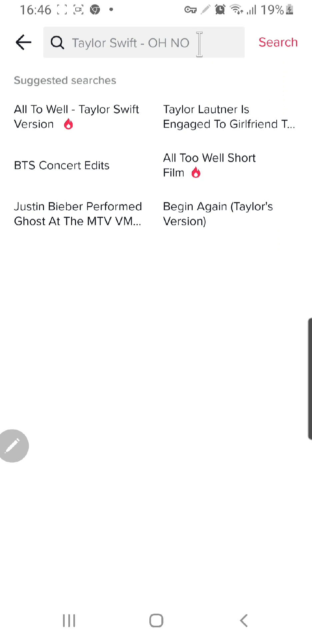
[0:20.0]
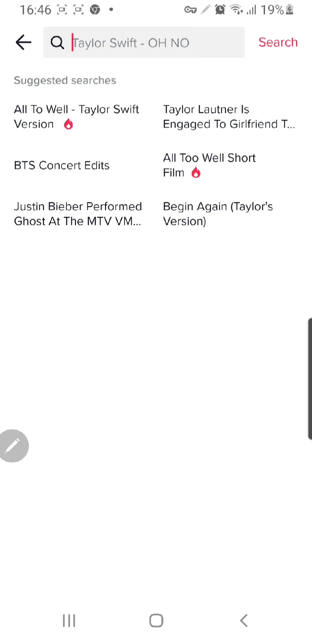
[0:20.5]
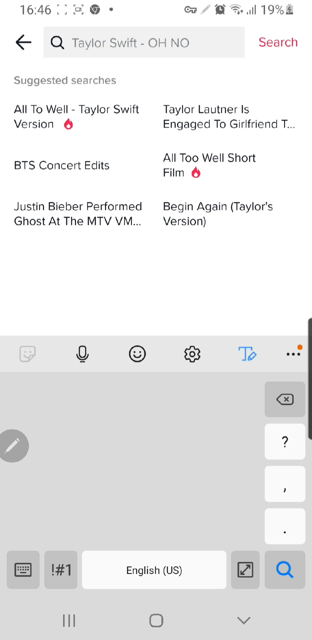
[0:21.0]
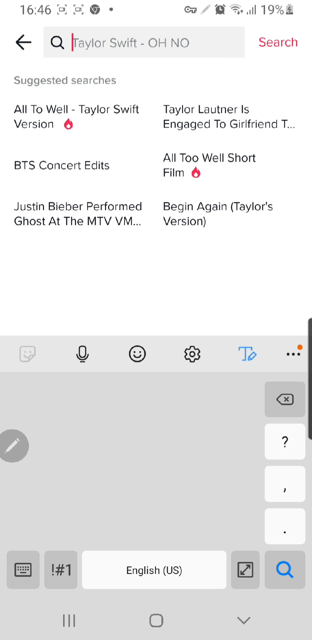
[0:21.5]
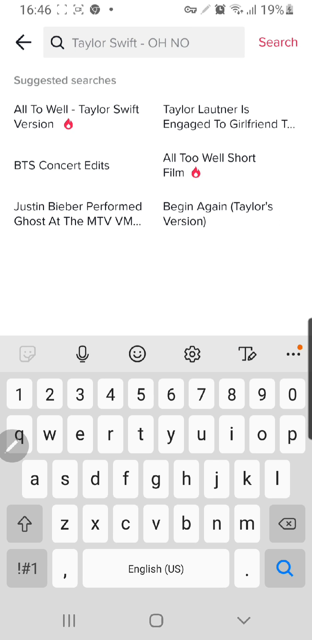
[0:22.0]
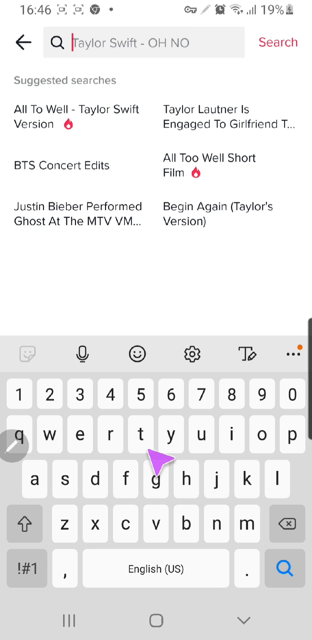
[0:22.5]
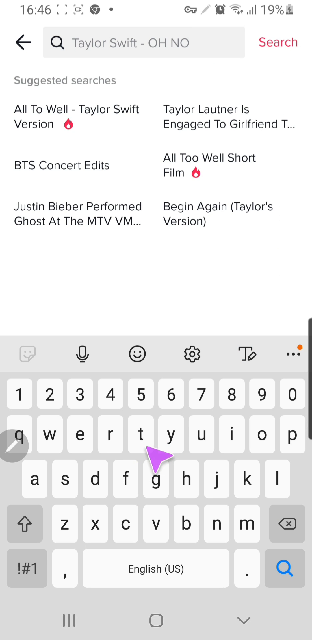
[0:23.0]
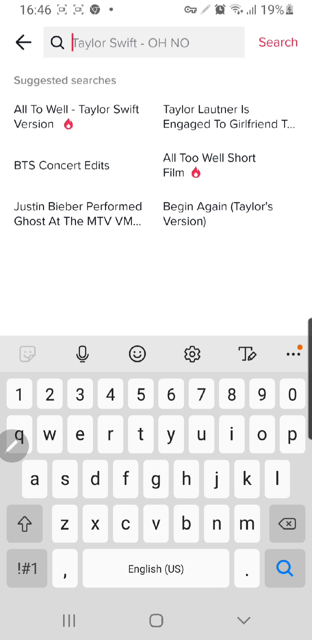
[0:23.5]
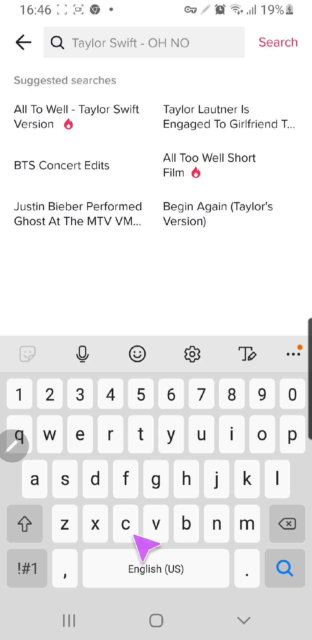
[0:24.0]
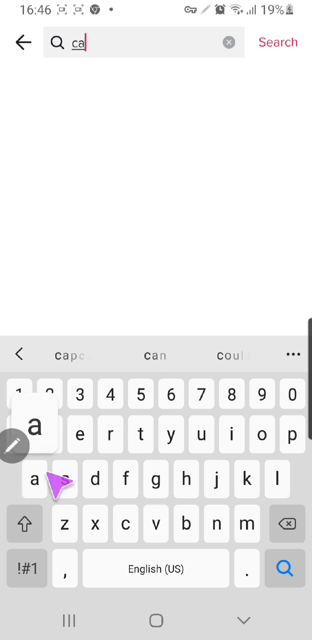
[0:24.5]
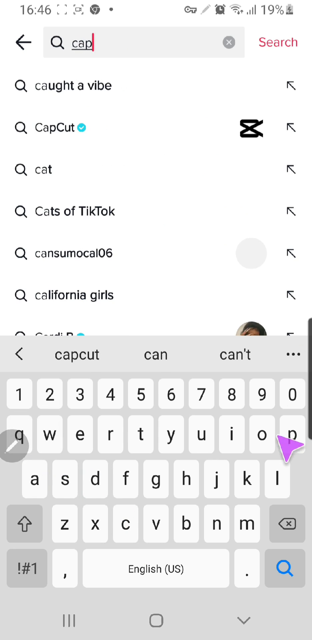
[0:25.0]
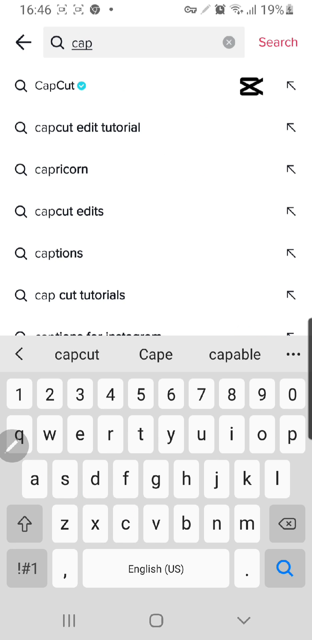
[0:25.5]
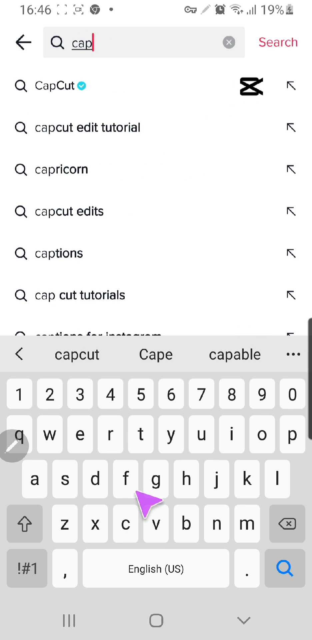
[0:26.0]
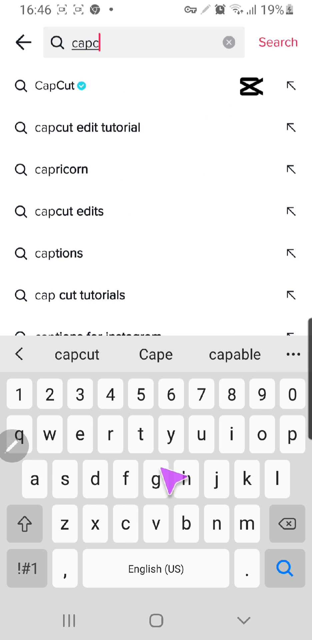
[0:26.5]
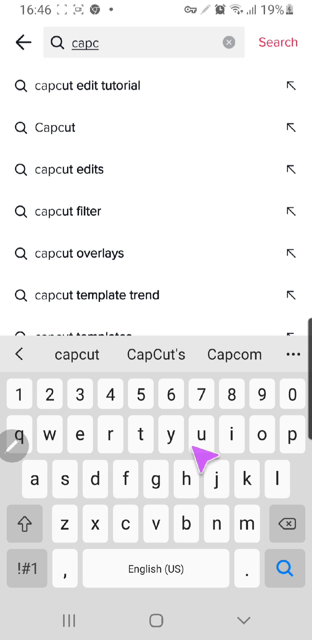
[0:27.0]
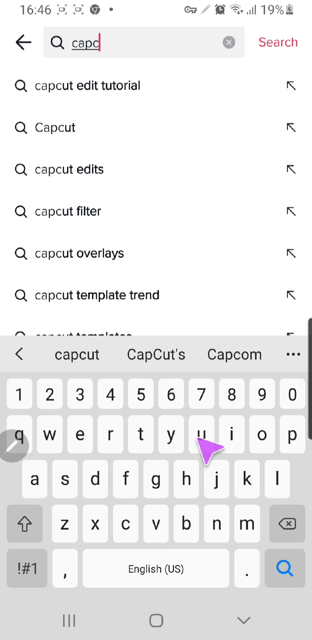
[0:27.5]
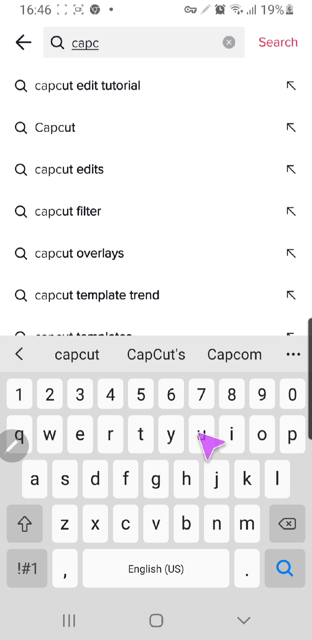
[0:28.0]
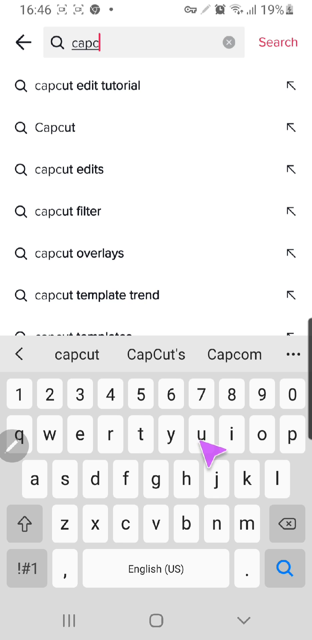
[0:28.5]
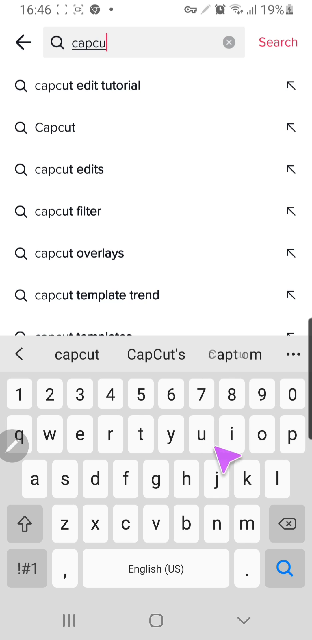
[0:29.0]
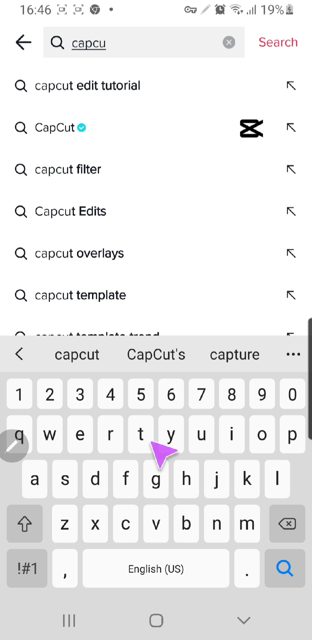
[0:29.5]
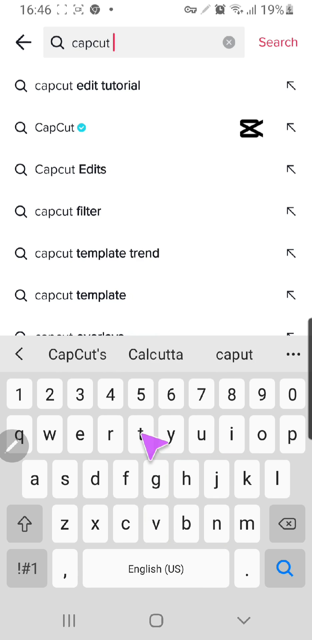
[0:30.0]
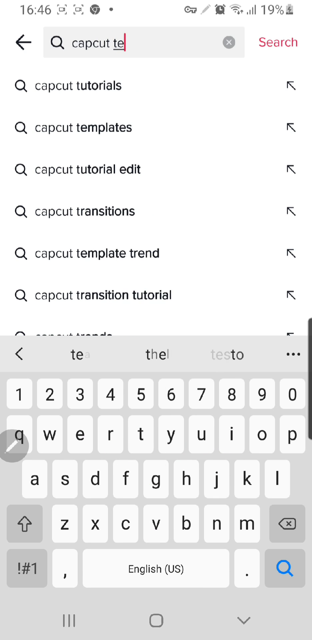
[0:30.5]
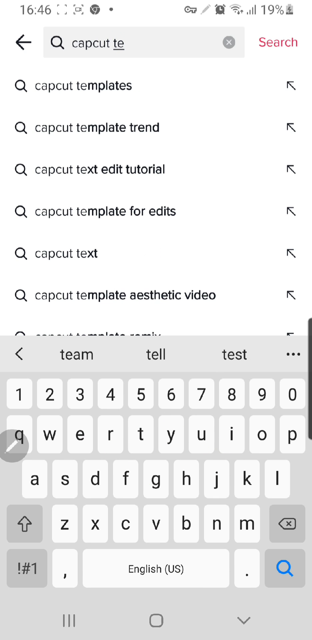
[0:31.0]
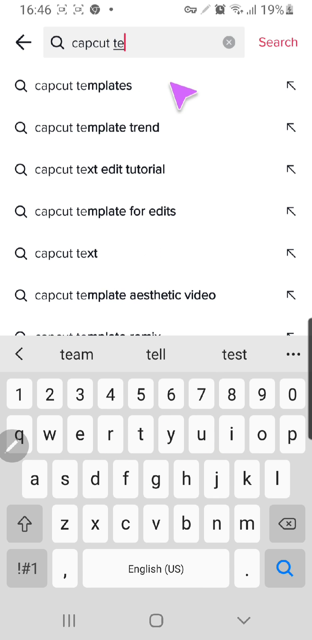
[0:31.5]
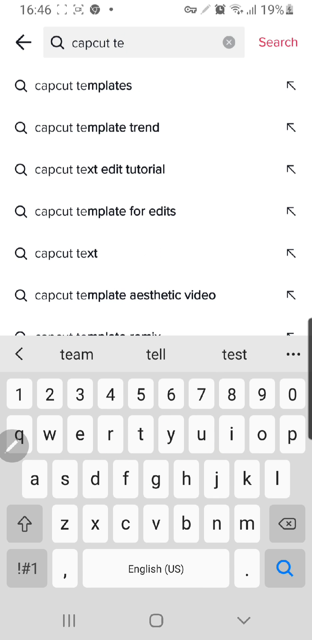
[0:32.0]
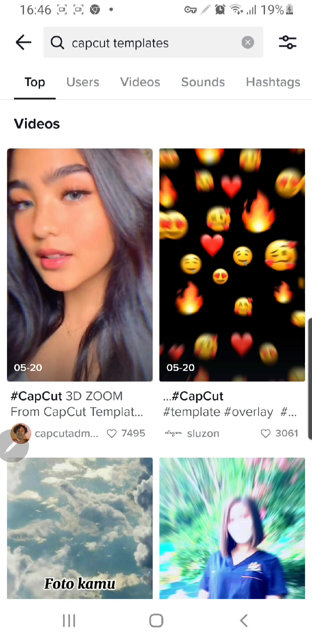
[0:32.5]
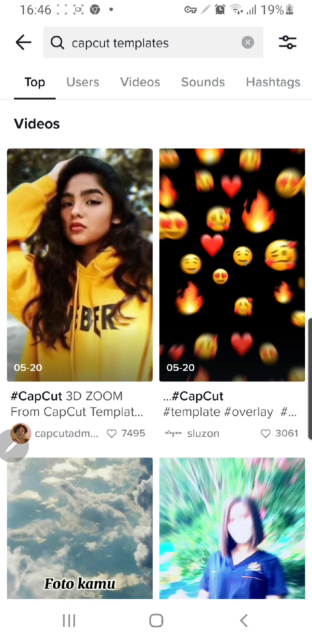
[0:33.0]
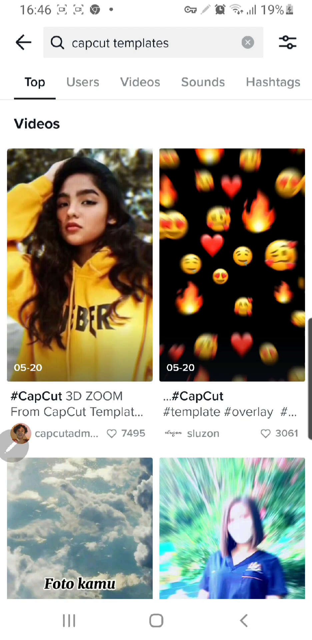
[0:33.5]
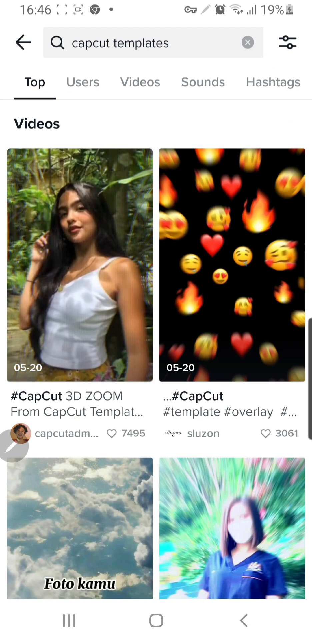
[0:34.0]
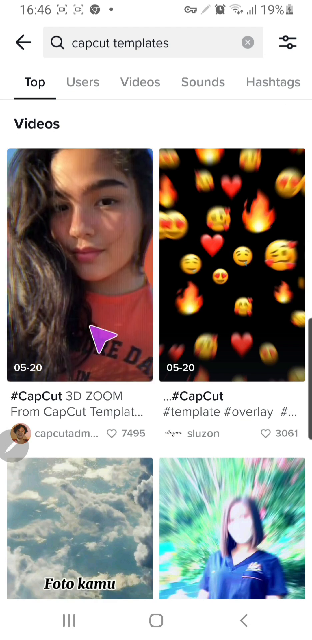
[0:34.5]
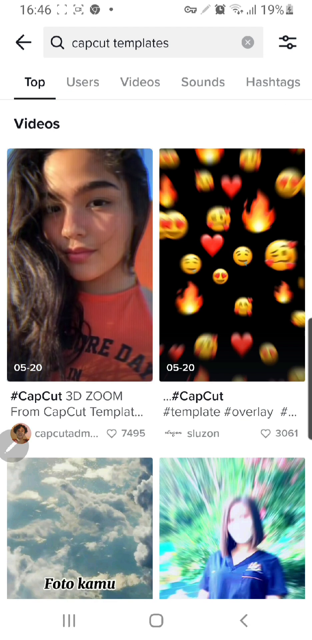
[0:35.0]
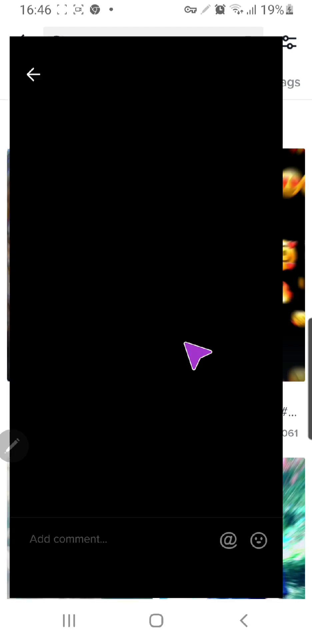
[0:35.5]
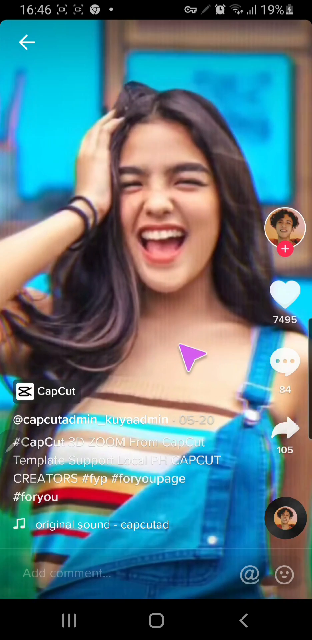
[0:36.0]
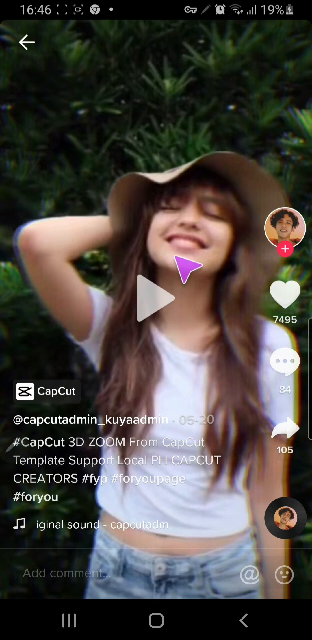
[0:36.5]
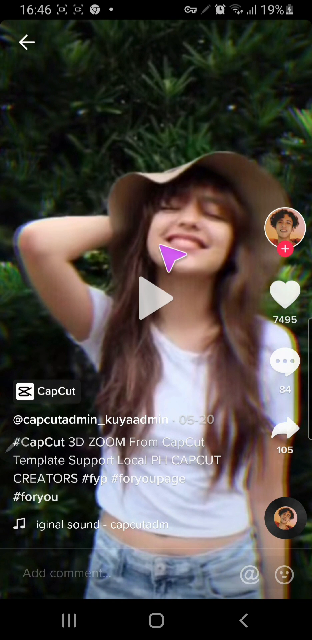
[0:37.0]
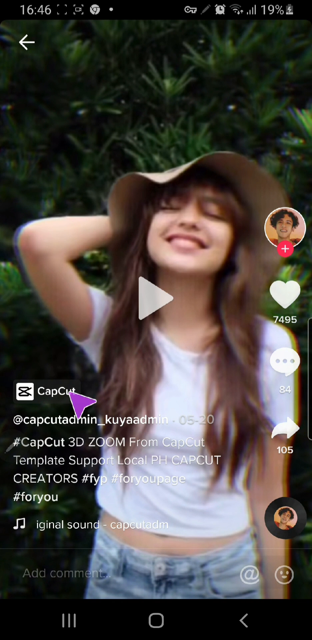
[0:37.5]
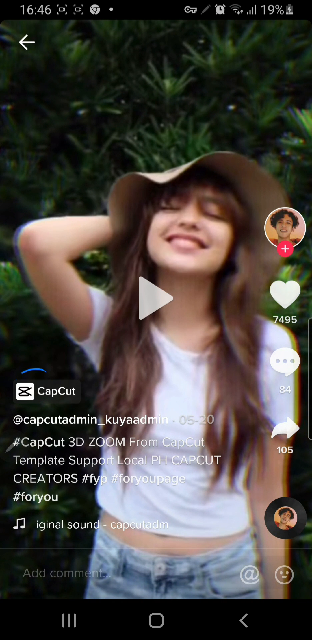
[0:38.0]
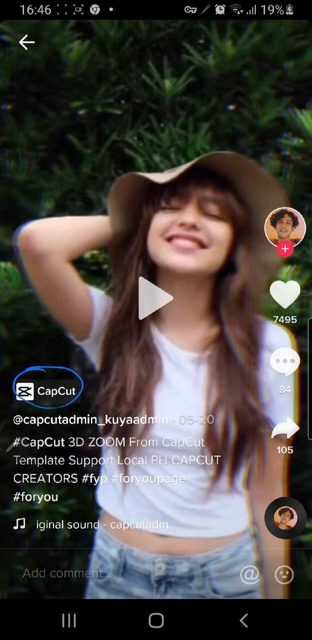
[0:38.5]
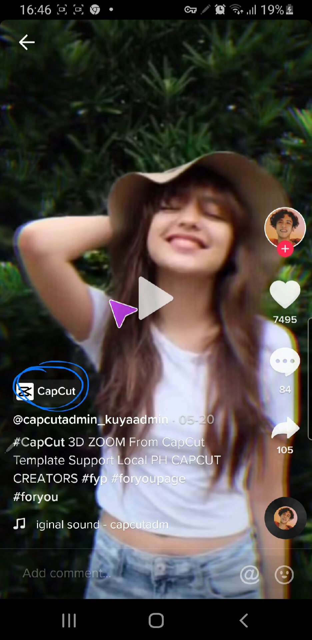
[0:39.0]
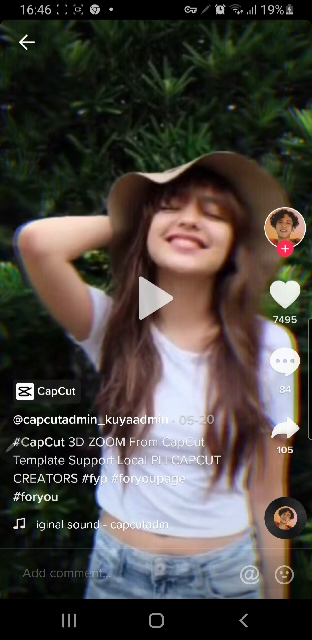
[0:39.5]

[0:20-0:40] The user clicks the search bar at the top, and the keyboard opens at the bottom. A mouse pointer is visible as they type "CapCut templates". Predictive text below the search bar shows the term, and the pointer moves up and clicks it. Four videos appear, and the user selects the top left one, a video of a woman, which plays. They circle an area on the left side of the screen that says "CapCut".